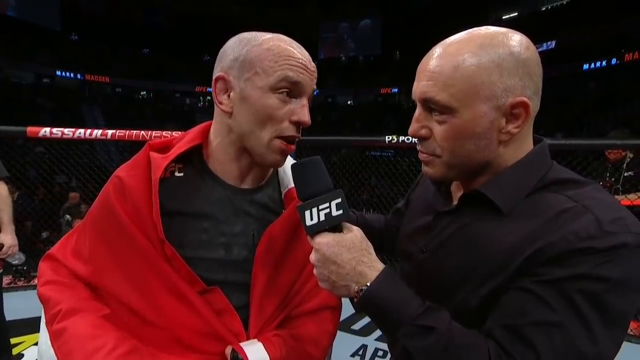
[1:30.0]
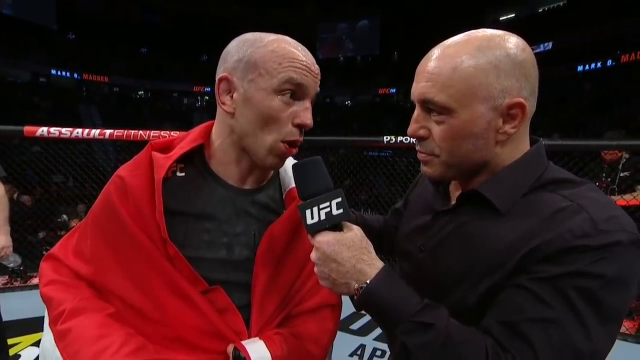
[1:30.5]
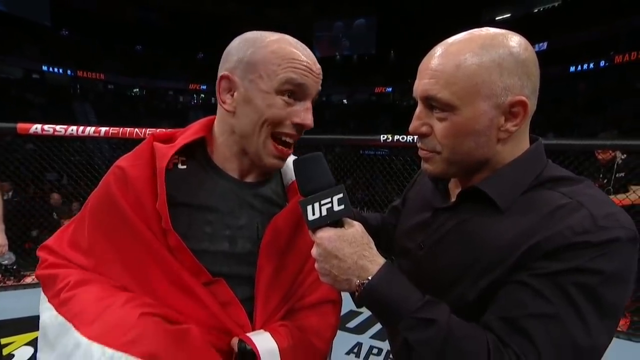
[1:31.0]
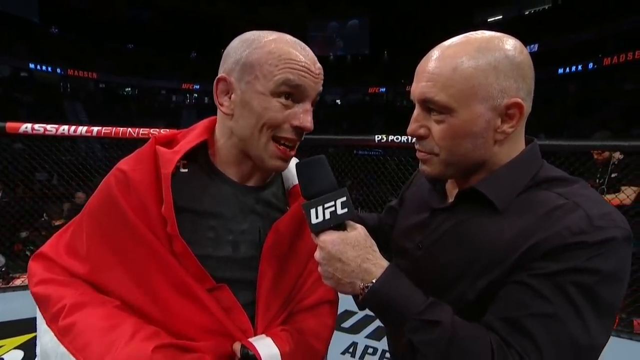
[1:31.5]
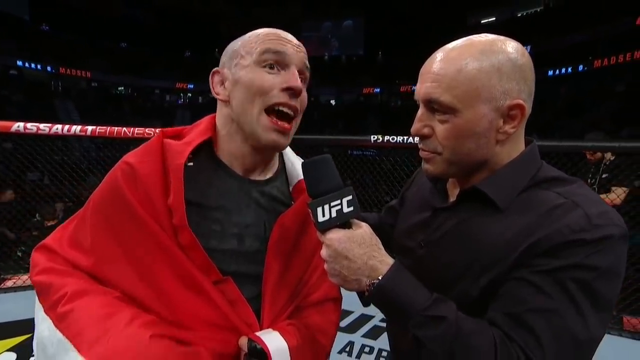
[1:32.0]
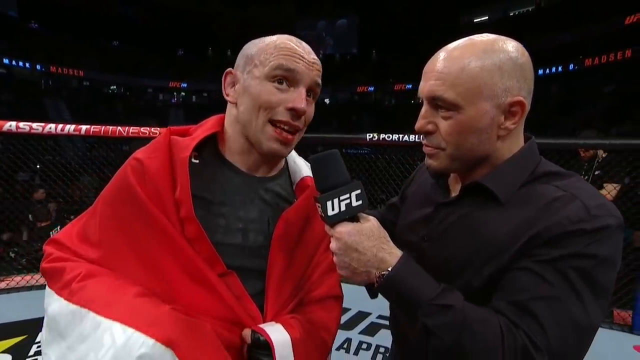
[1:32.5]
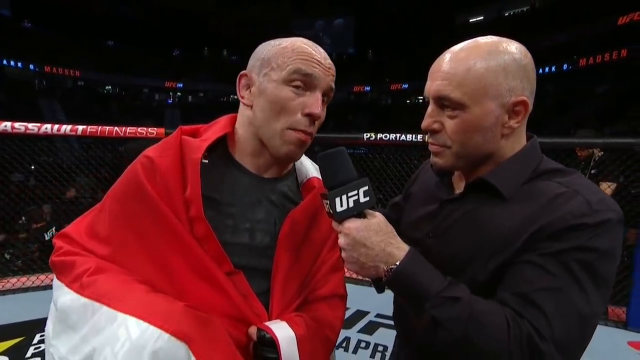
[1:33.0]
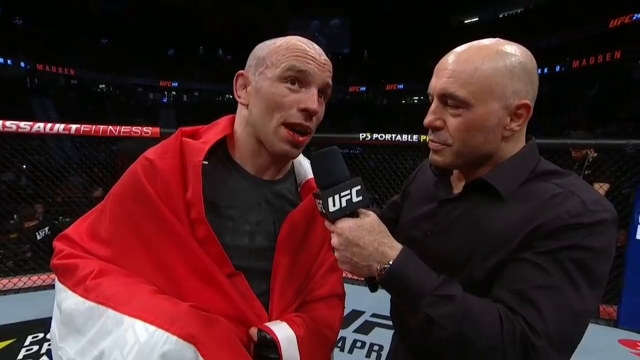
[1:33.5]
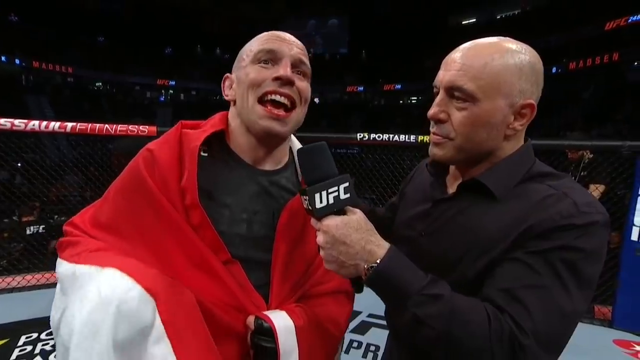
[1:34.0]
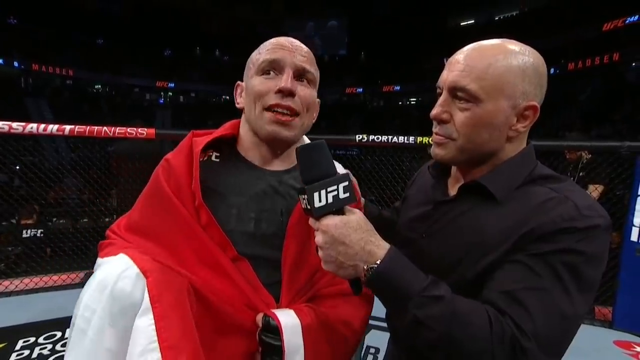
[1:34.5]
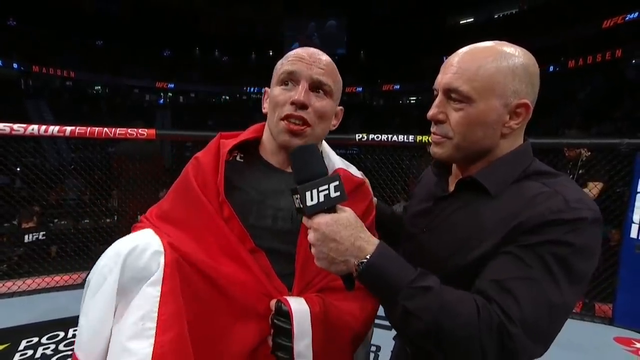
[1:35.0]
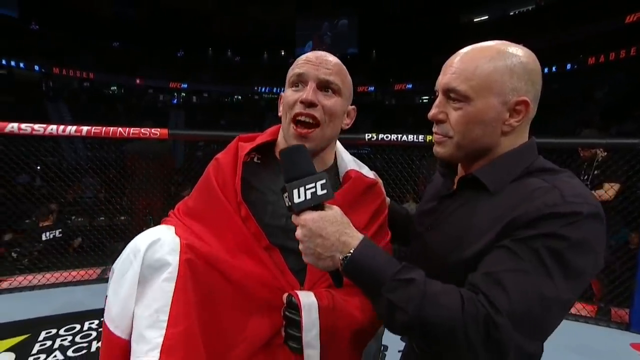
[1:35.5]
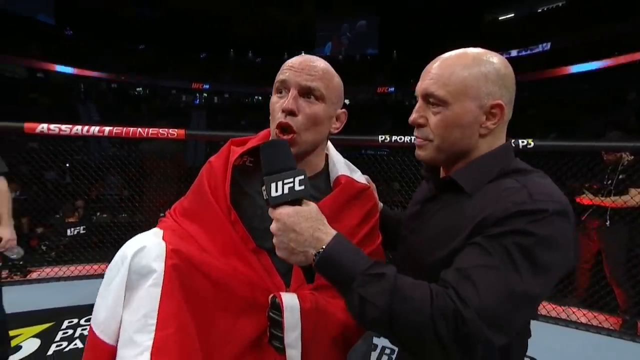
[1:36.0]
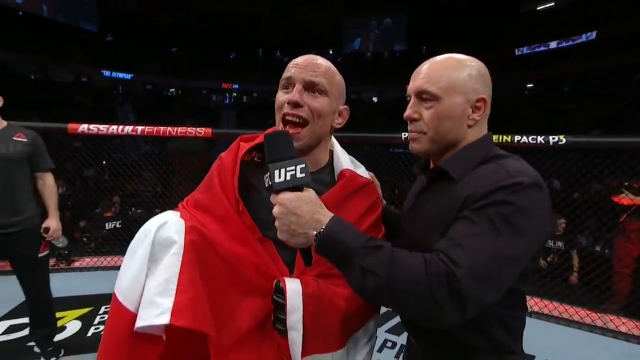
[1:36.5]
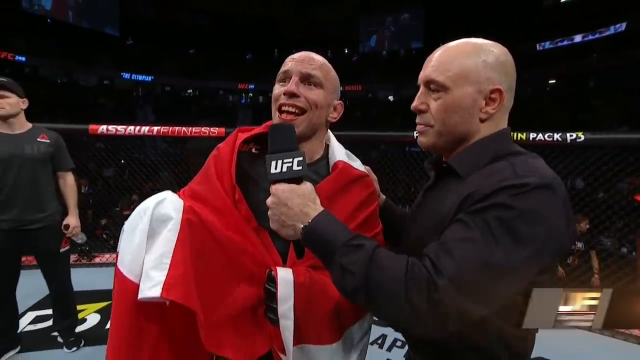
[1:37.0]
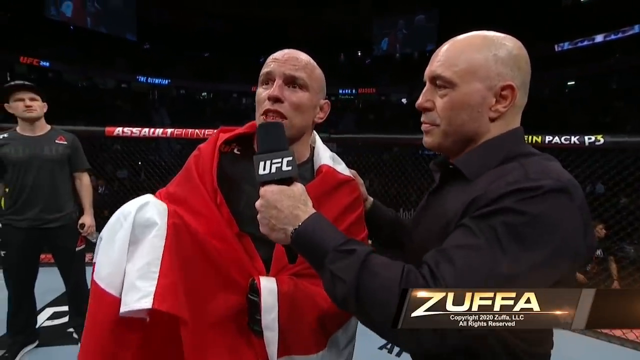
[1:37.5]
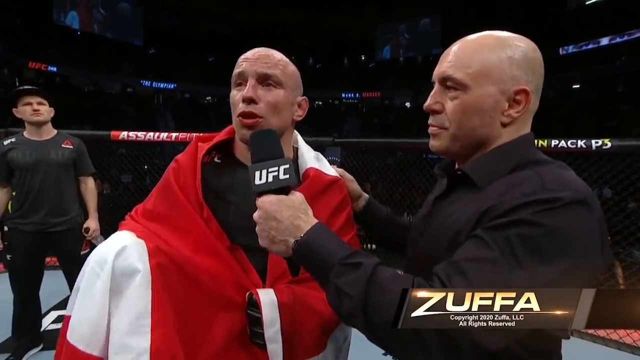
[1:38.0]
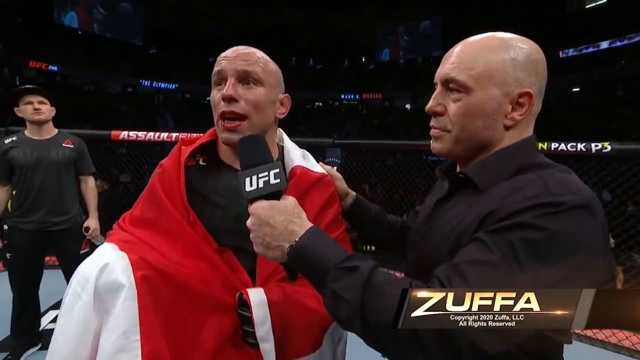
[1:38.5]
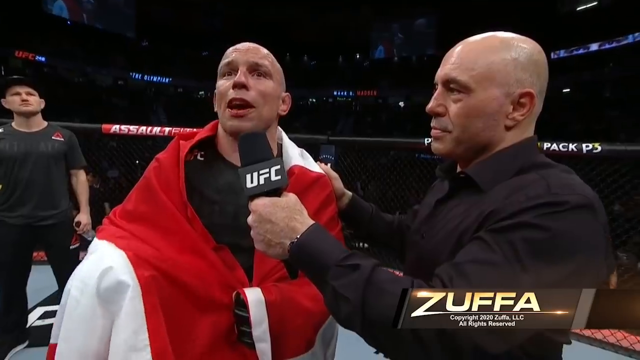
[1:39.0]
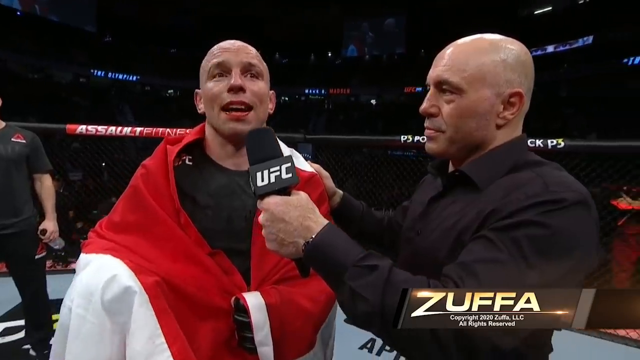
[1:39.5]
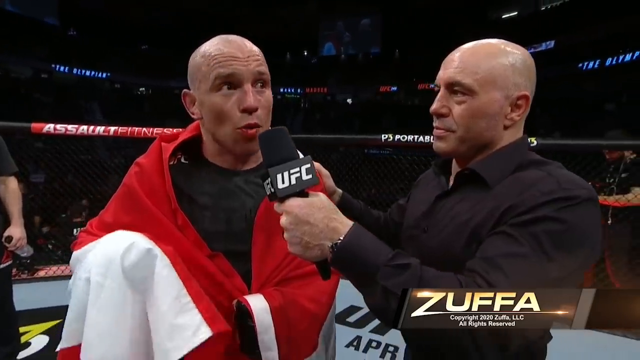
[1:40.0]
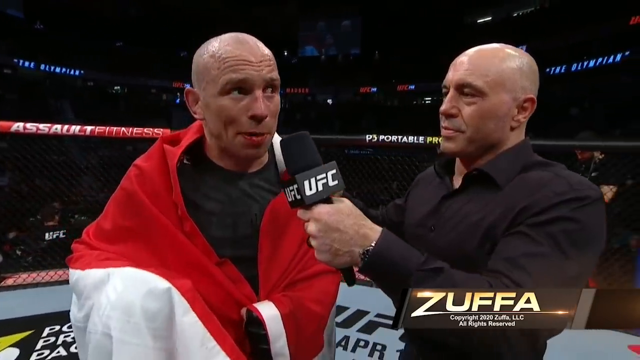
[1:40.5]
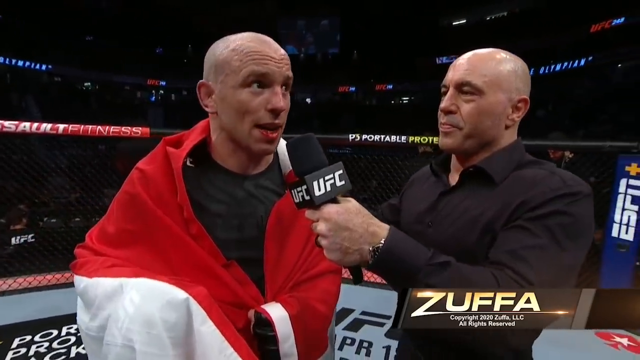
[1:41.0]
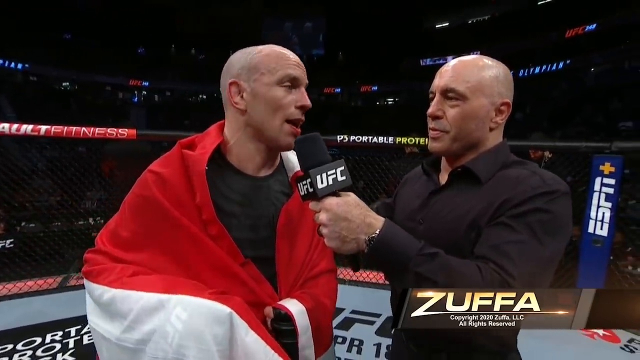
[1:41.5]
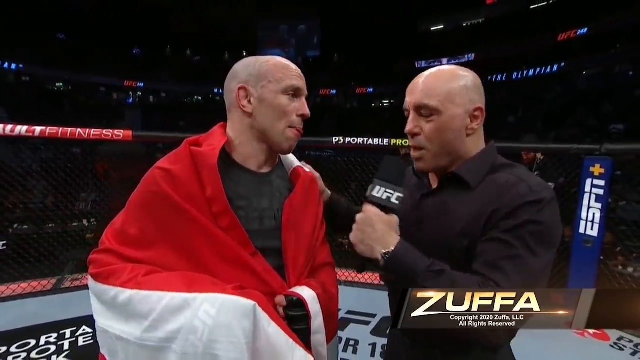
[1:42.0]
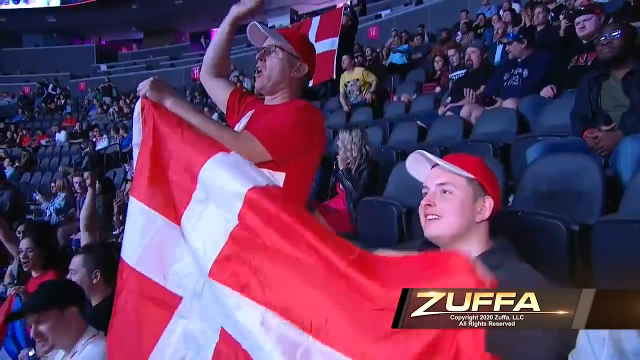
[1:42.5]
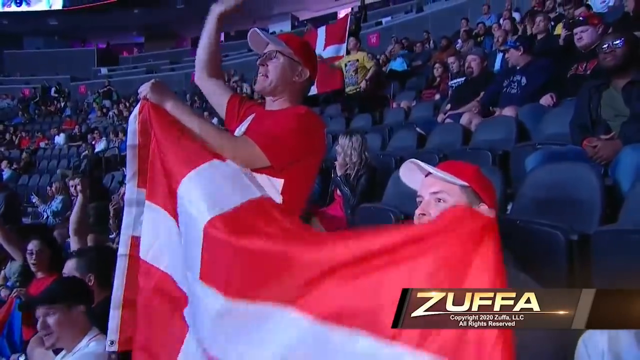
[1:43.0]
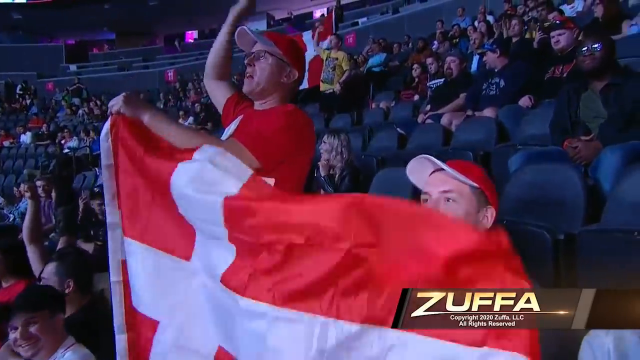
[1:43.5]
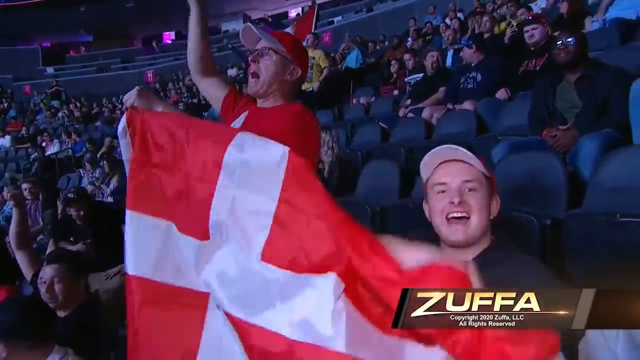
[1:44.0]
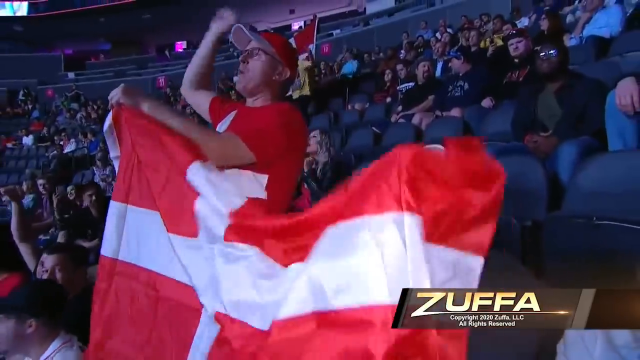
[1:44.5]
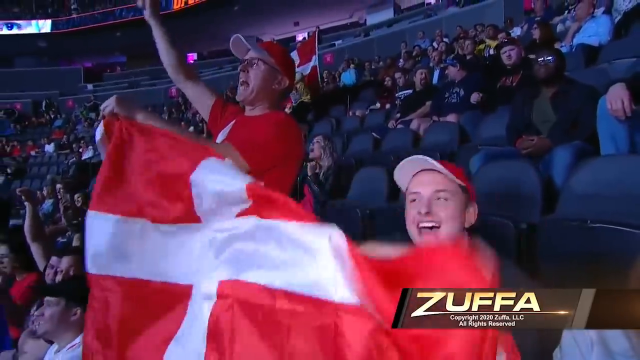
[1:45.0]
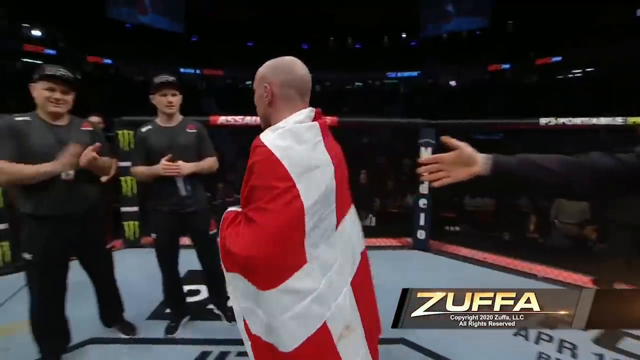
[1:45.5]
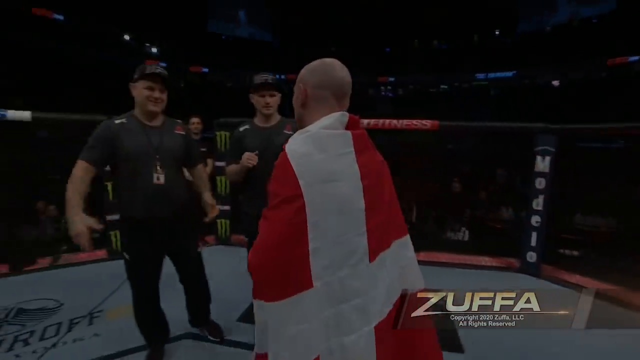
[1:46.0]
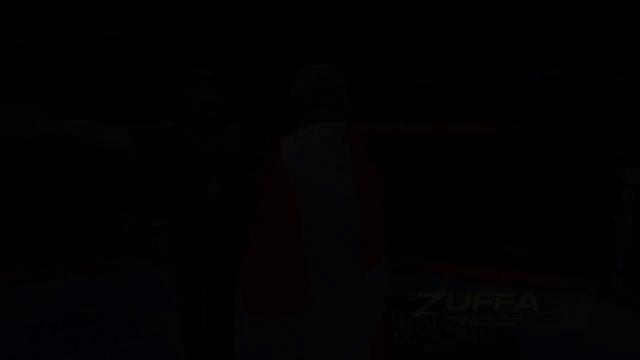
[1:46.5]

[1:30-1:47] As the interview continues, Madsen looks out toward the crowd instead of at Rogan, apparently acknowledging the crowd and saying something to them; he seems to be saying "thank you." A shot shows a couple of very happy people in the crowd waving the same flag Madsen has. A corner man or a referee is in the background in the ring, which is otherwise empty. Sponsors that cannot be read appear on the octagon pads. A "copyright Zelfa" notice appears next to the UFC watermark as the video fades to black, and at the very end Madsen heads toward his corner men and approaches to hug them.